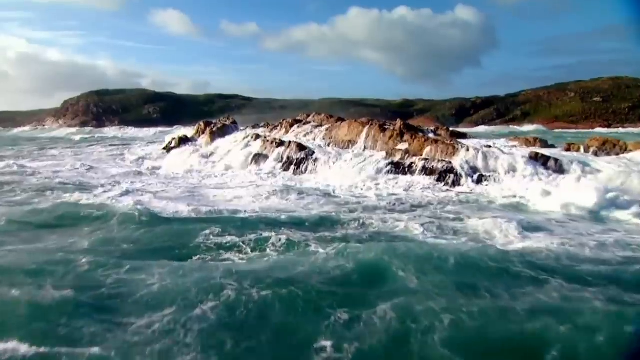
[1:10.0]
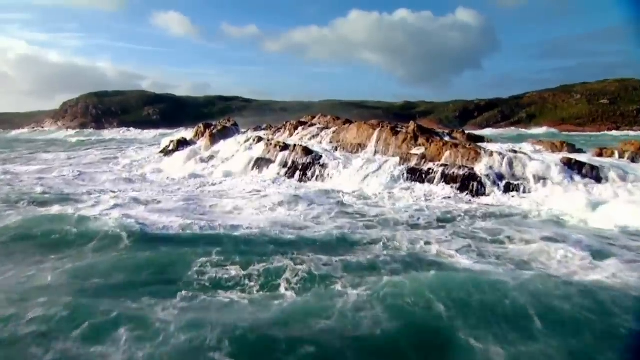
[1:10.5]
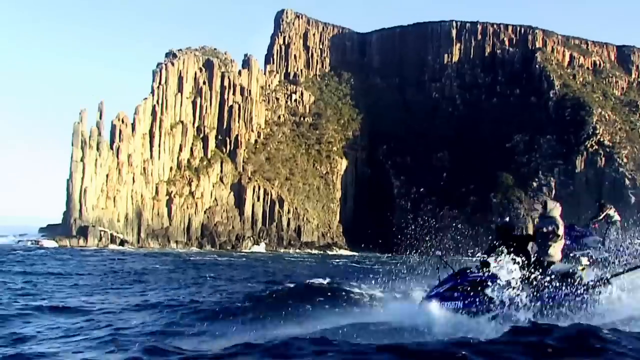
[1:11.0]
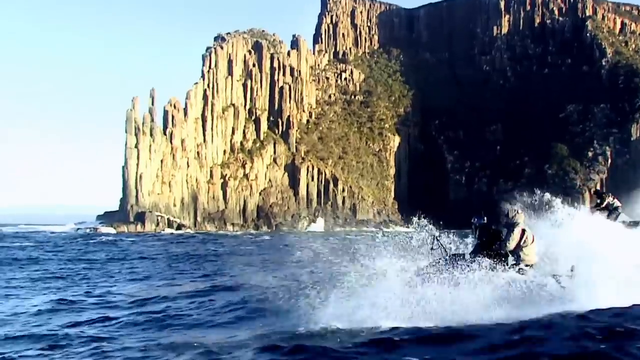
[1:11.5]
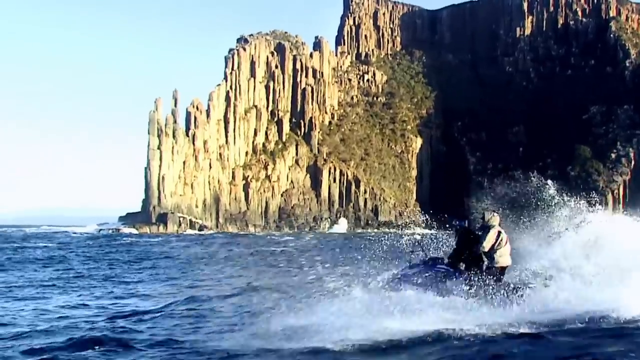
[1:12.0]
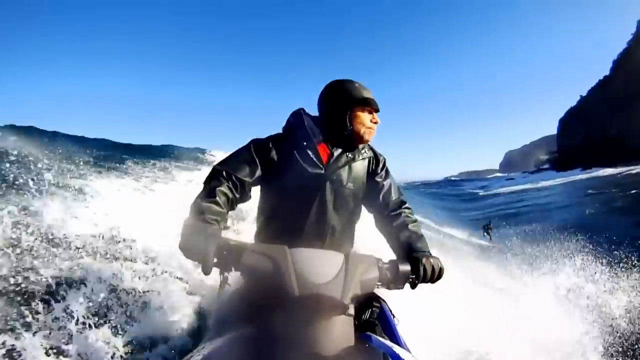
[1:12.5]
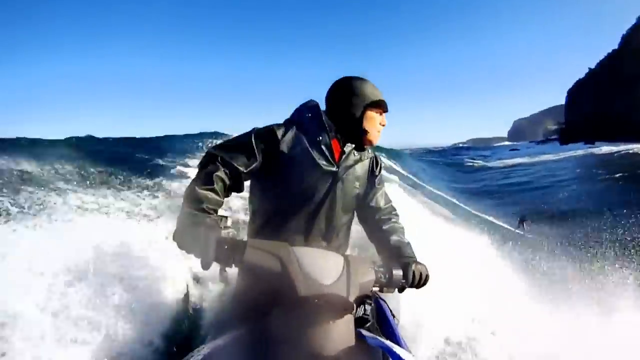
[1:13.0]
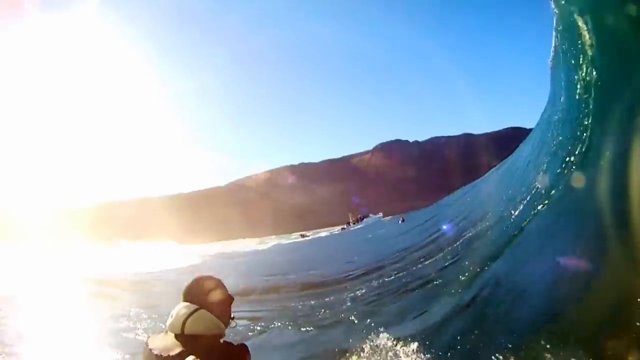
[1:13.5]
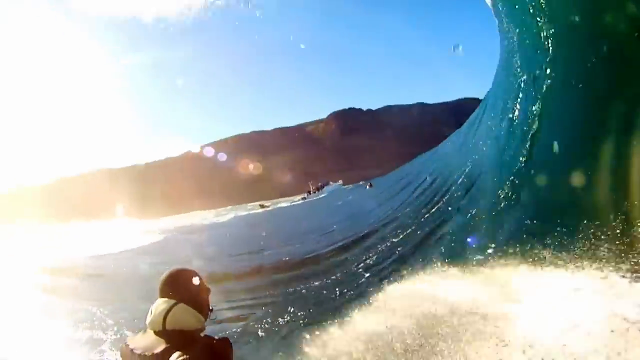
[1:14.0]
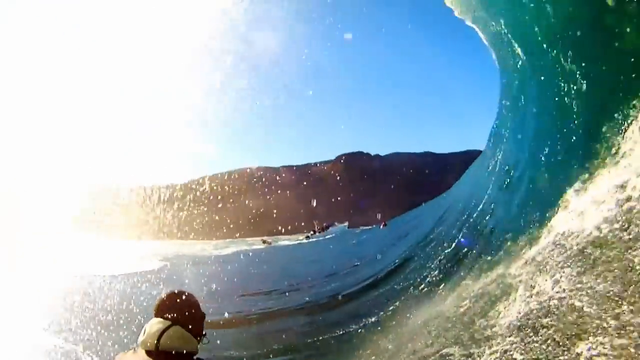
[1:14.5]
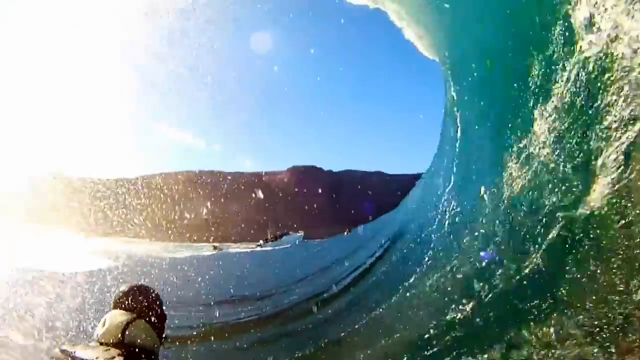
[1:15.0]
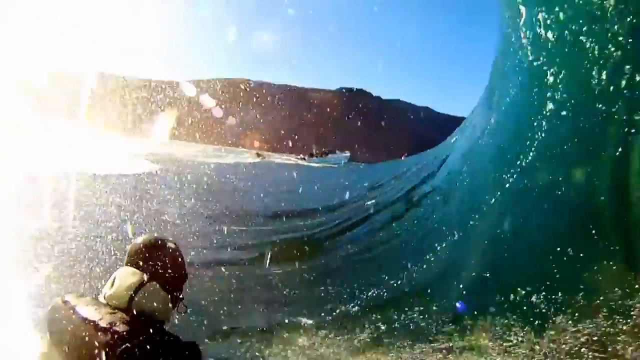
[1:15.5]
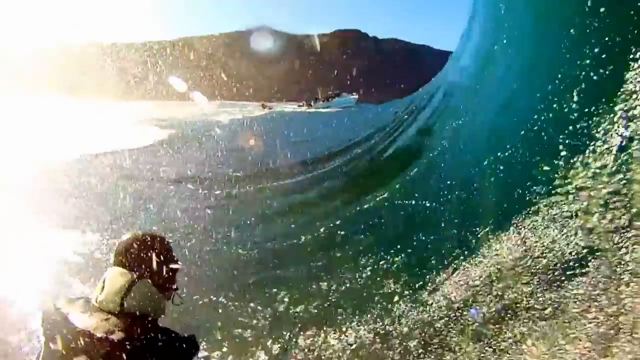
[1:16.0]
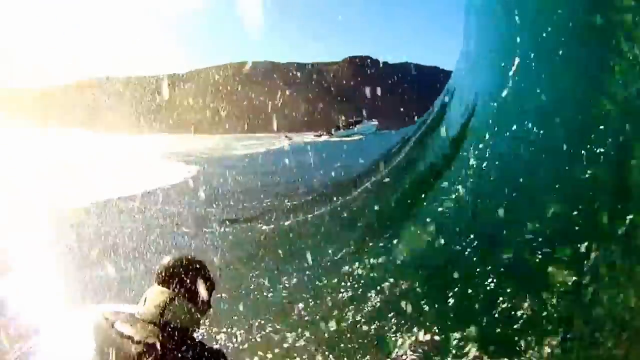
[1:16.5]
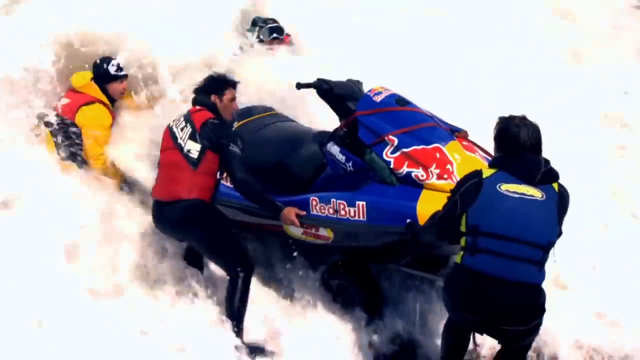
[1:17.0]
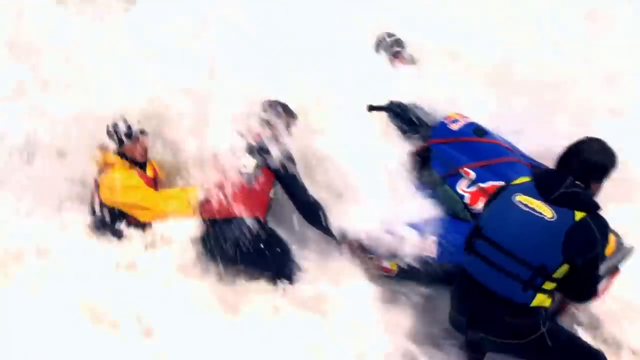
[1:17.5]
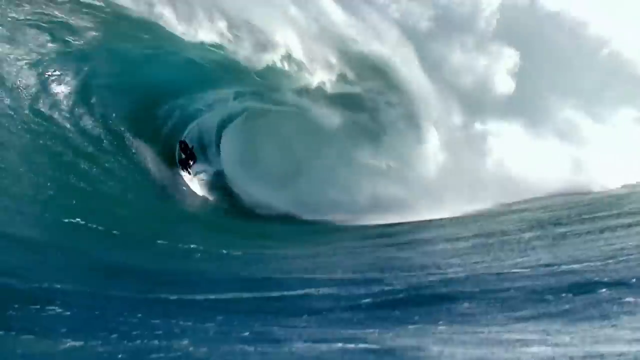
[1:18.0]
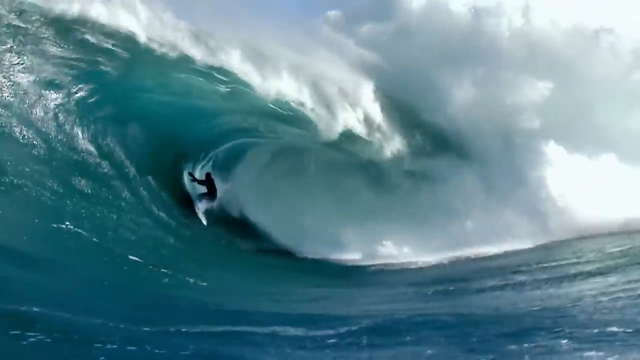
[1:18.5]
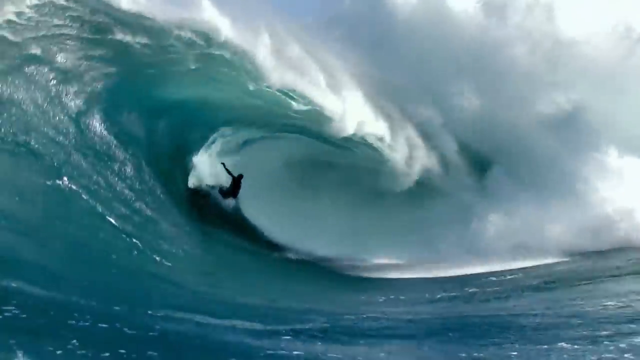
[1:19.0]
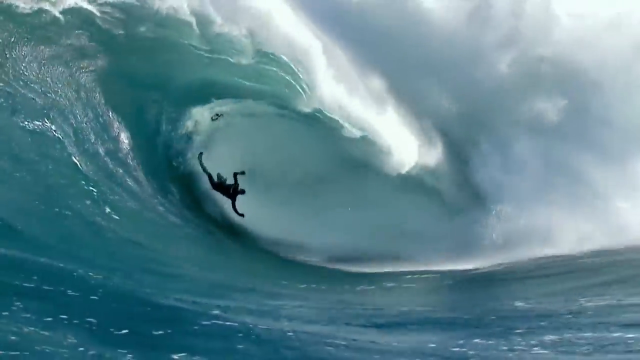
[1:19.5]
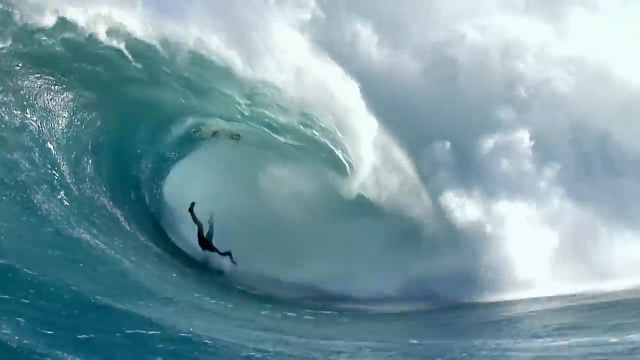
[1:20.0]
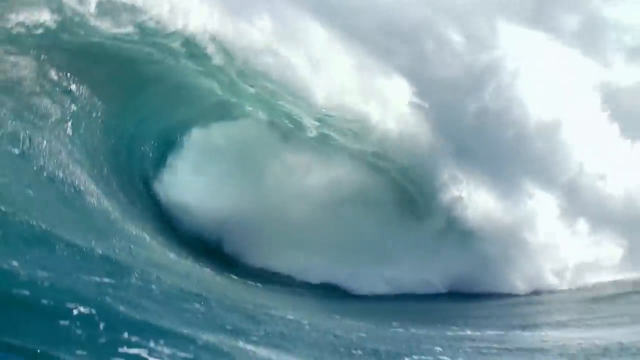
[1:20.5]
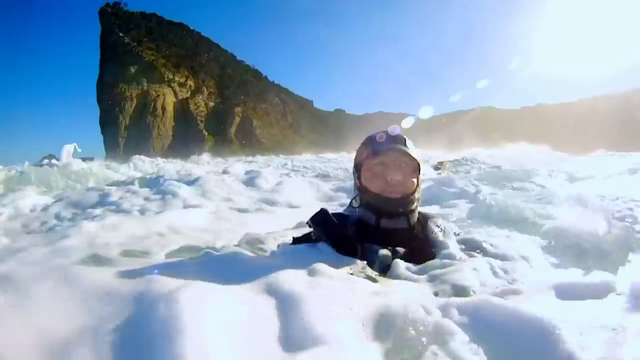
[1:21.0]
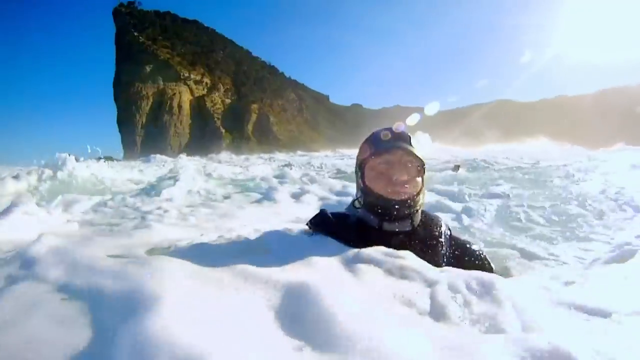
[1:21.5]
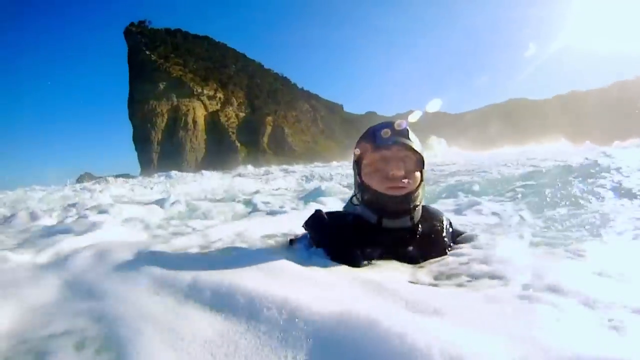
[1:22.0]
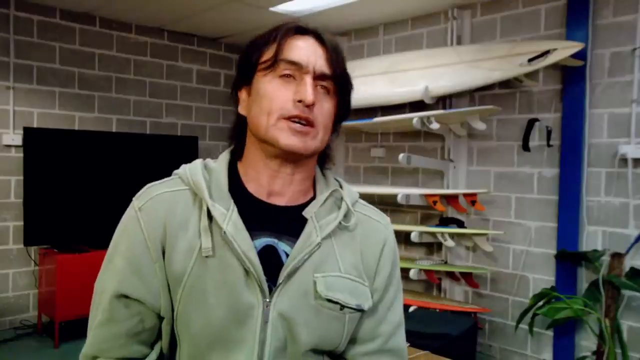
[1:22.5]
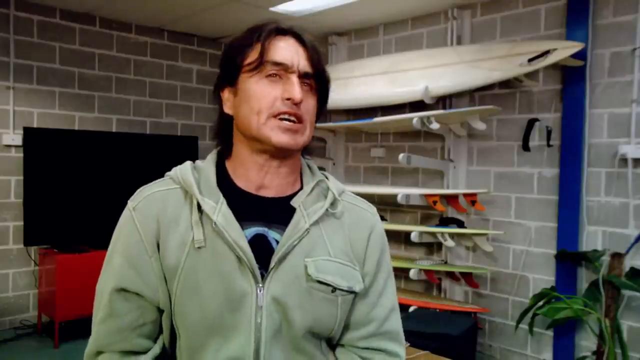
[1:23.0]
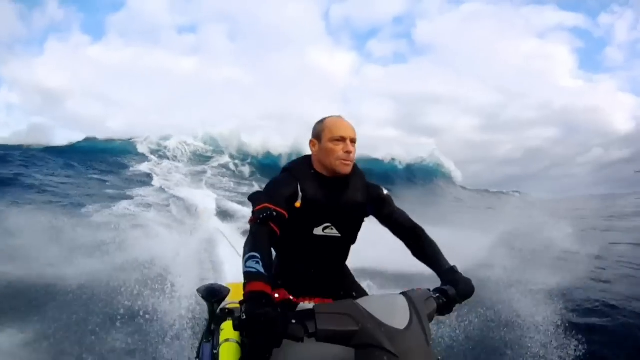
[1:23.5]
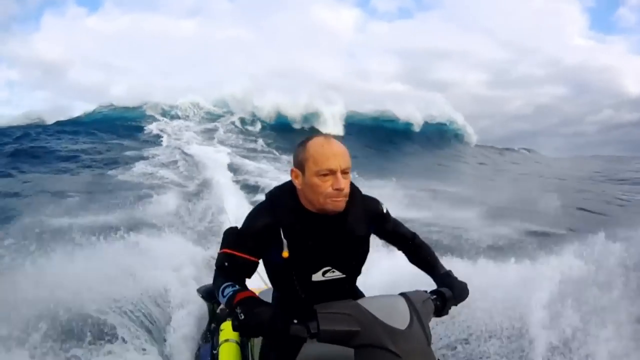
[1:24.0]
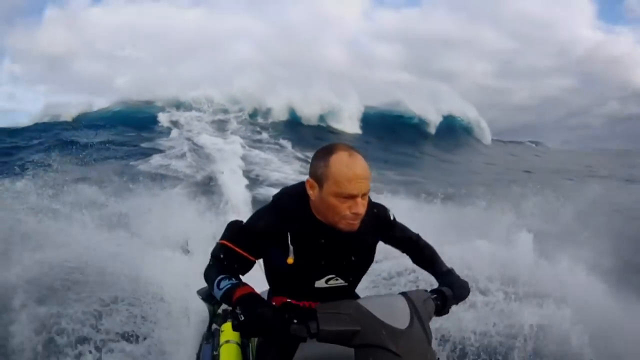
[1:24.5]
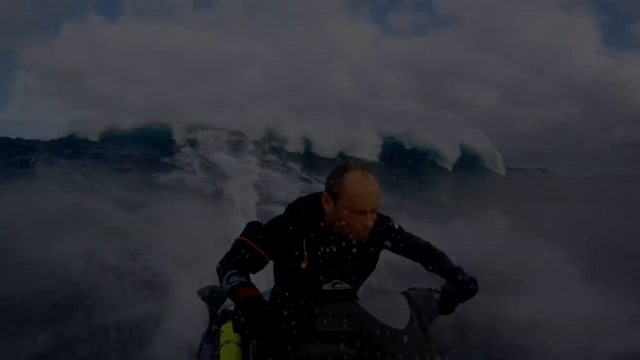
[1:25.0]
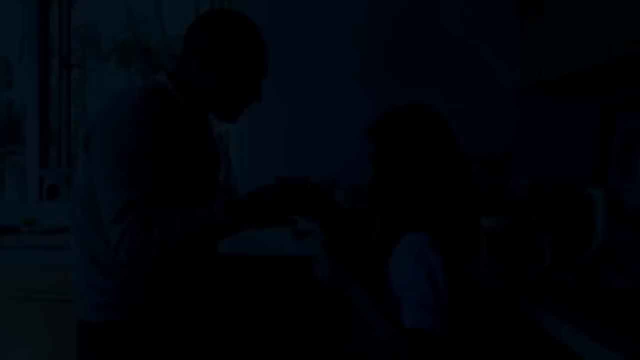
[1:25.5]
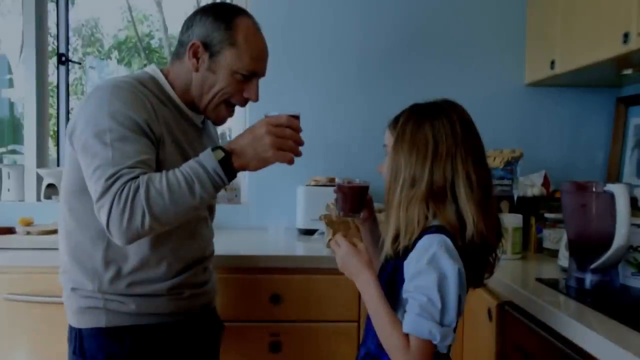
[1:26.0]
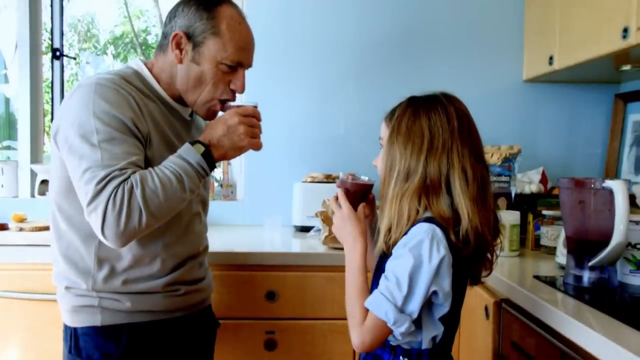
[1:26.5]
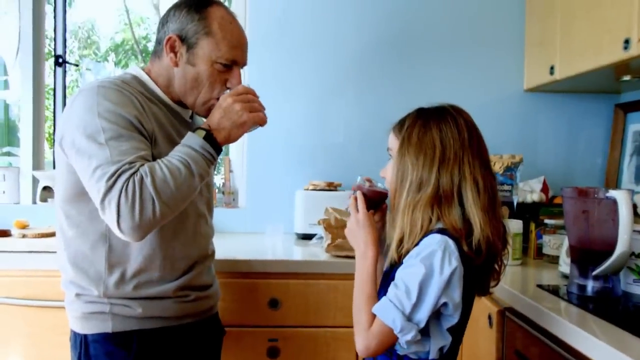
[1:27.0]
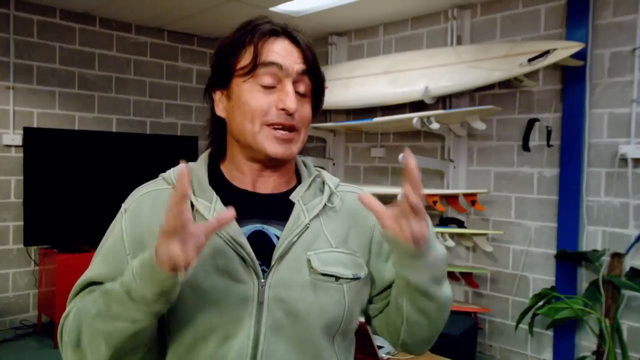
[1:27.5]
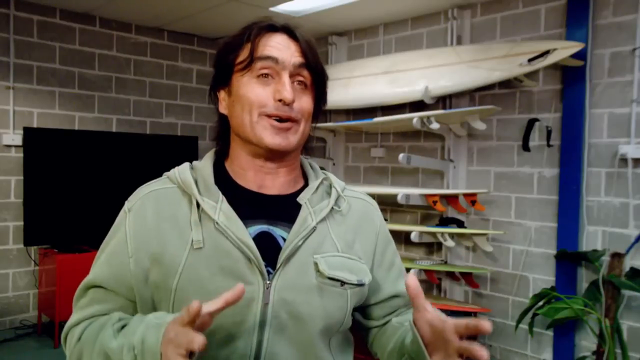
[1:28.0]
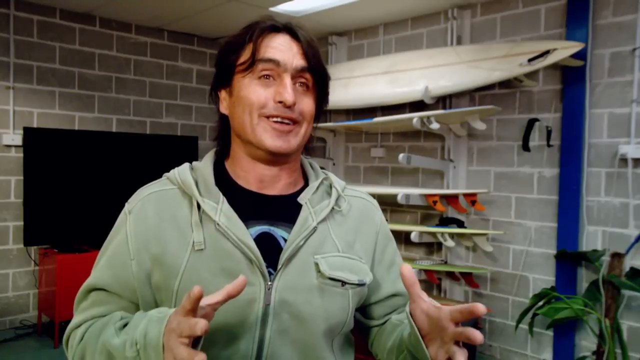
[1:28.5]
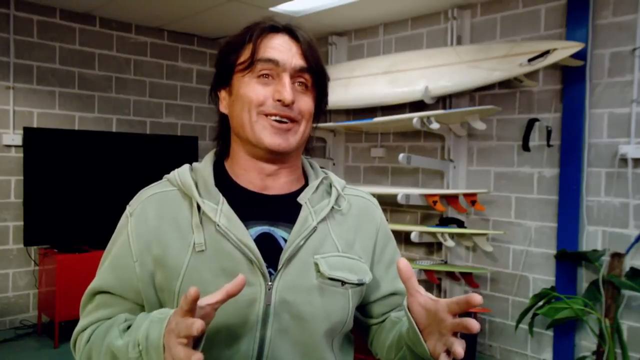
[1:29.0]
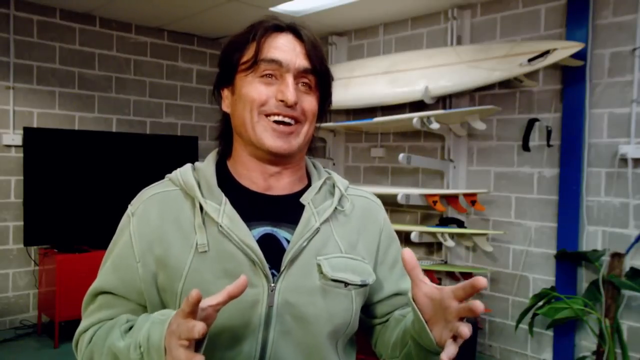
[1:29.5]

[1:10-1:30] People ride motorcycles, and then a person talks directly to the audience. There are many clouds in the sky, with trees in the background. In a field area there is a beach where waves crash into rocks, causing a lot of pixelation. Green grass and trees form a large patch of background. It is the middle of the day, so everything and all the shades of color are clearly visible.